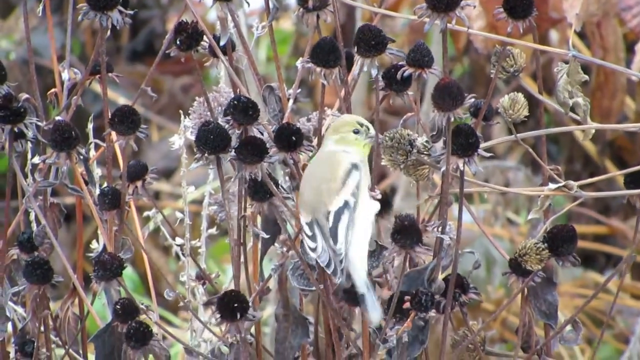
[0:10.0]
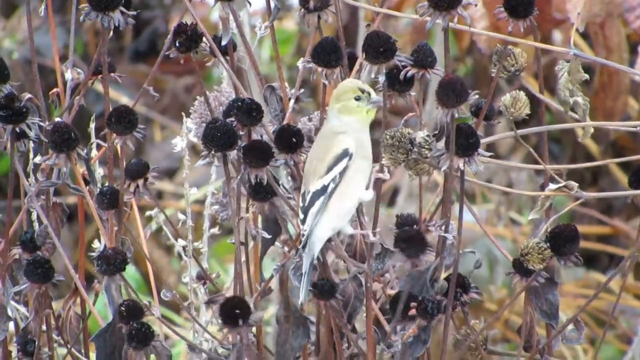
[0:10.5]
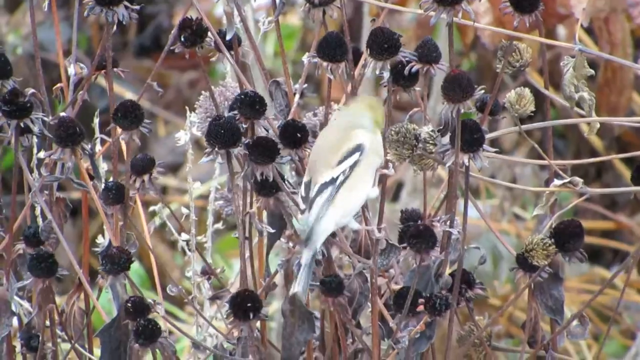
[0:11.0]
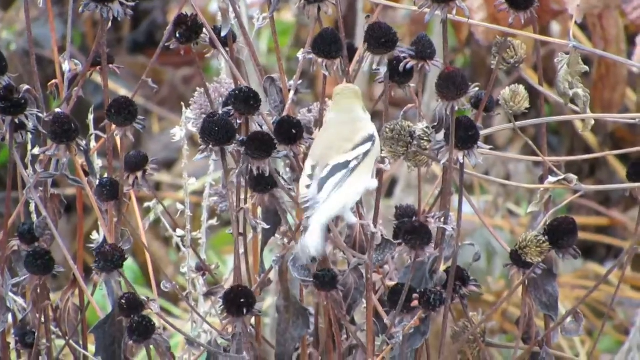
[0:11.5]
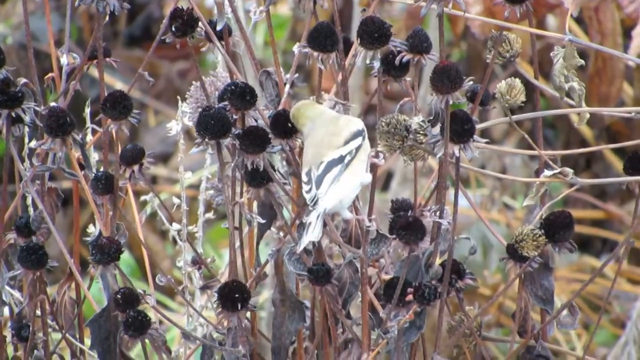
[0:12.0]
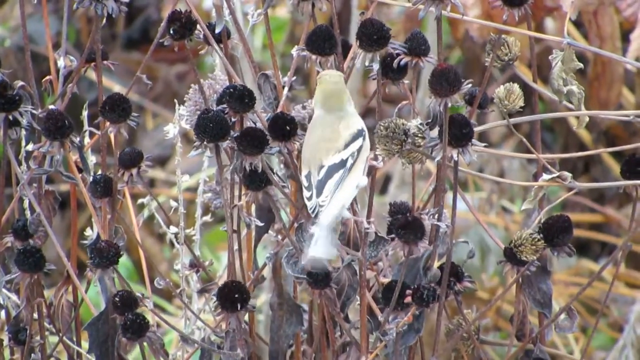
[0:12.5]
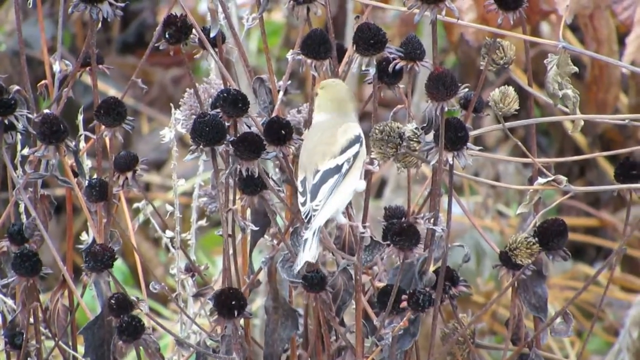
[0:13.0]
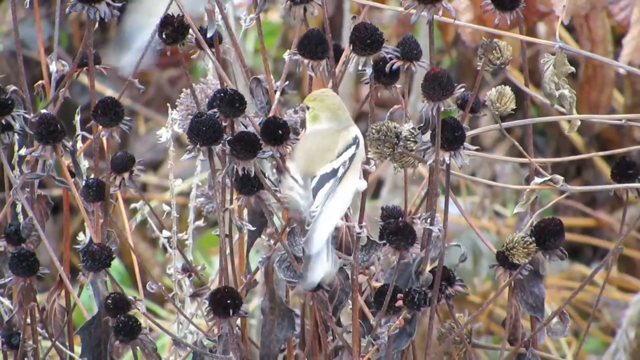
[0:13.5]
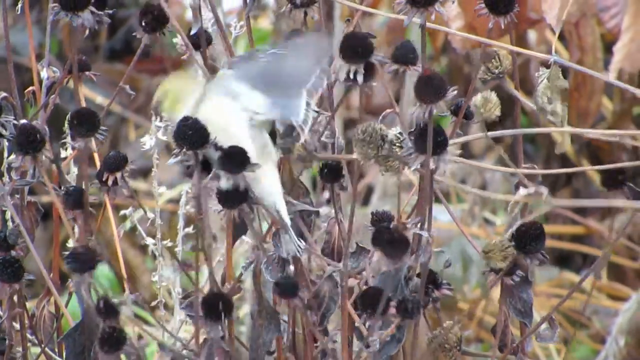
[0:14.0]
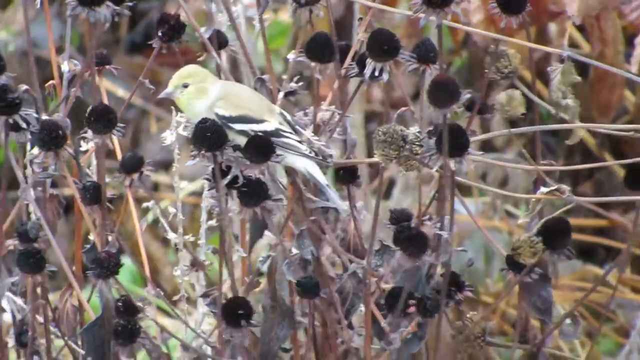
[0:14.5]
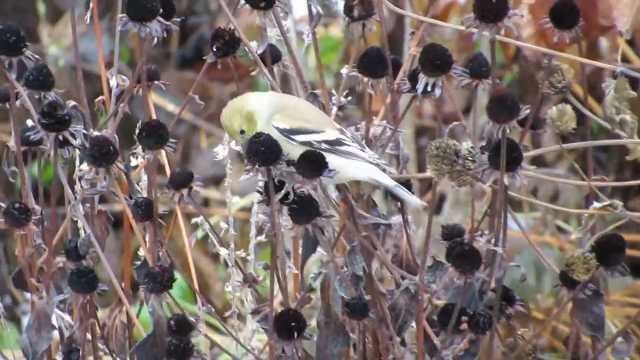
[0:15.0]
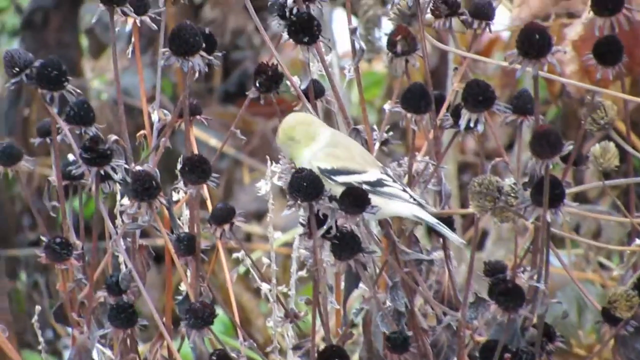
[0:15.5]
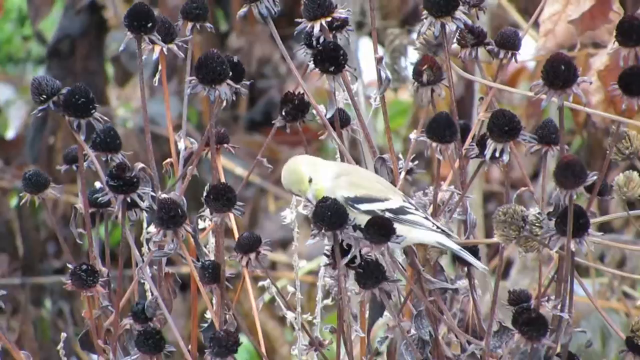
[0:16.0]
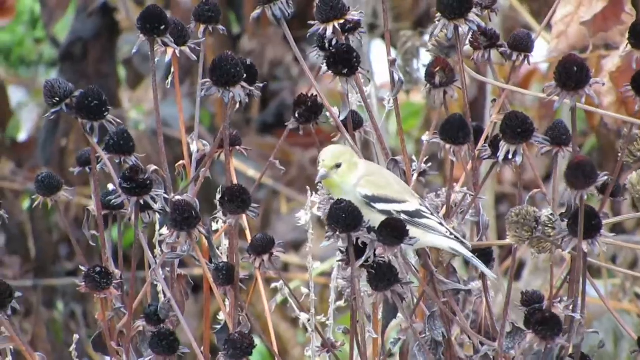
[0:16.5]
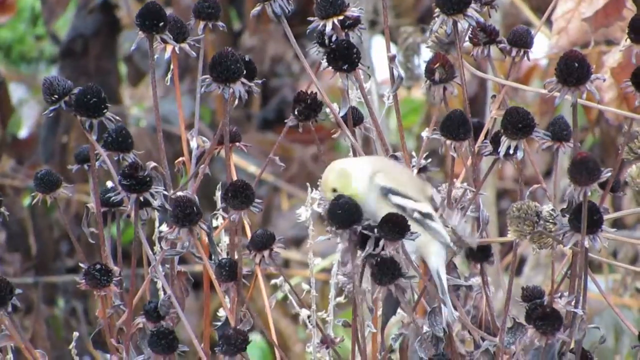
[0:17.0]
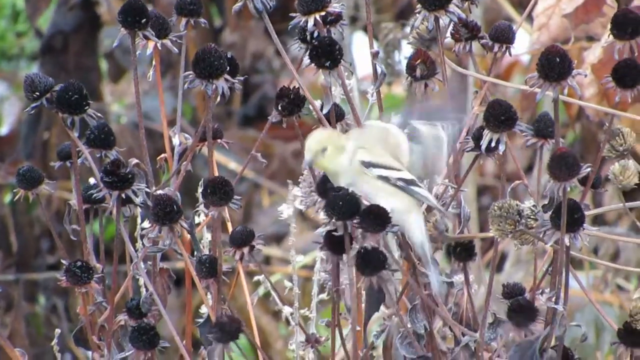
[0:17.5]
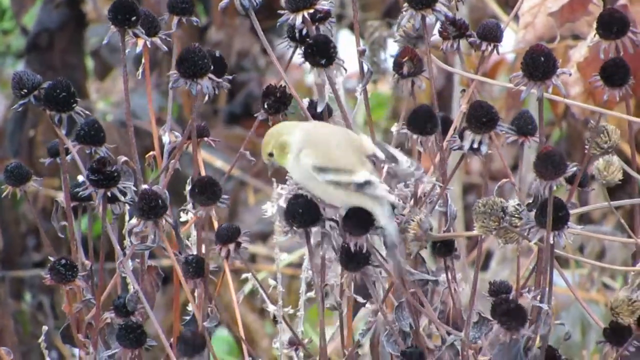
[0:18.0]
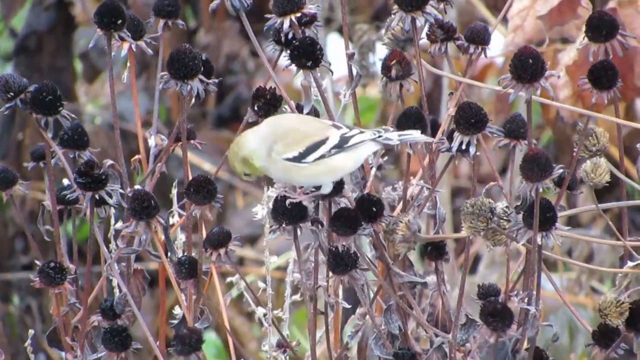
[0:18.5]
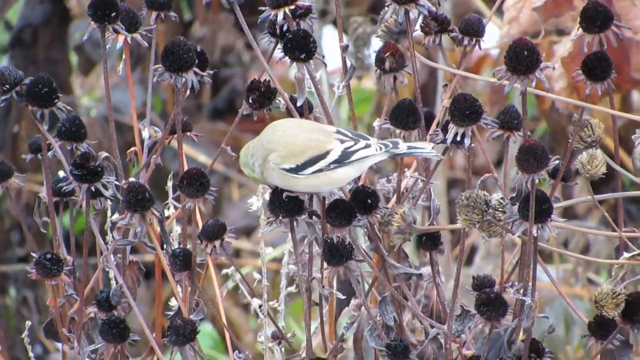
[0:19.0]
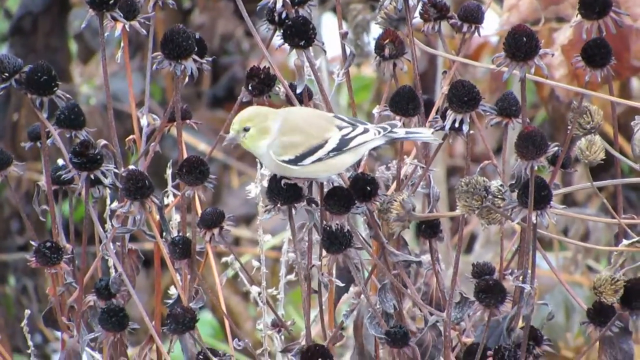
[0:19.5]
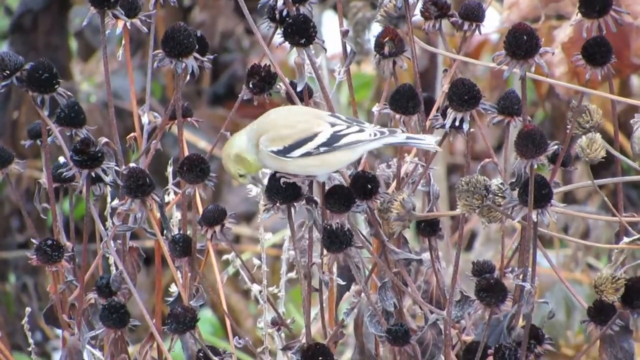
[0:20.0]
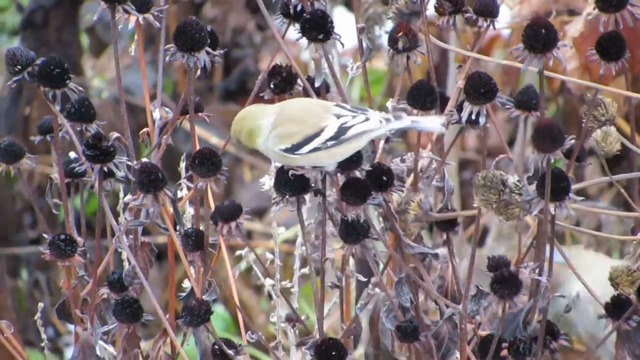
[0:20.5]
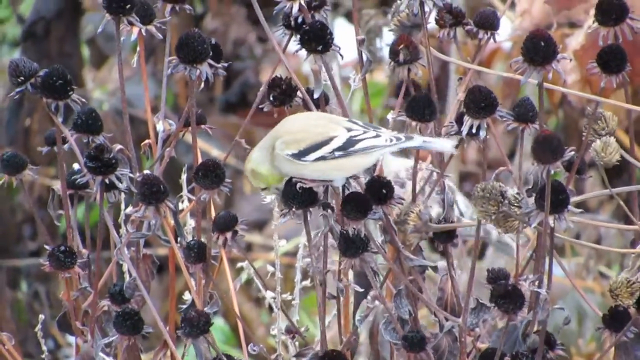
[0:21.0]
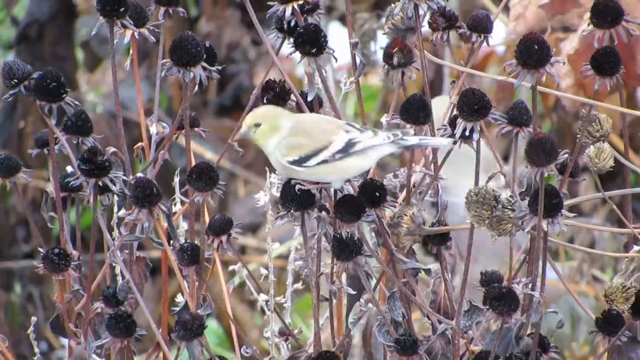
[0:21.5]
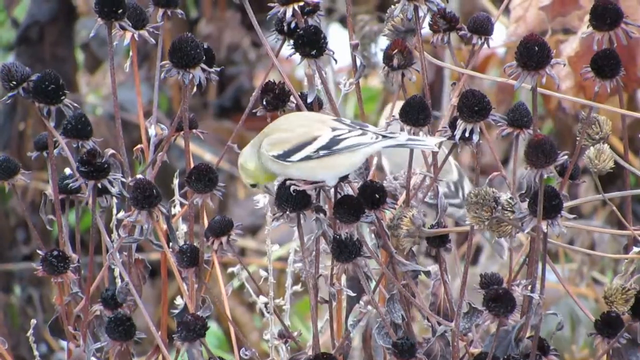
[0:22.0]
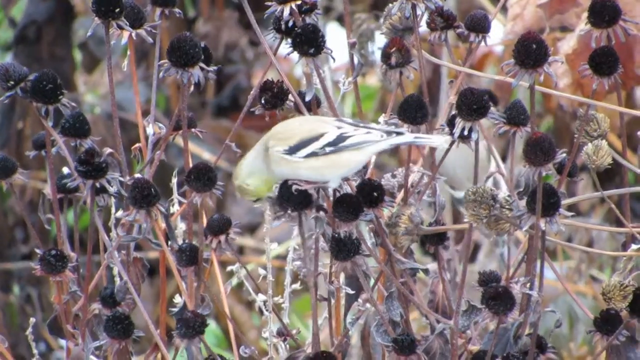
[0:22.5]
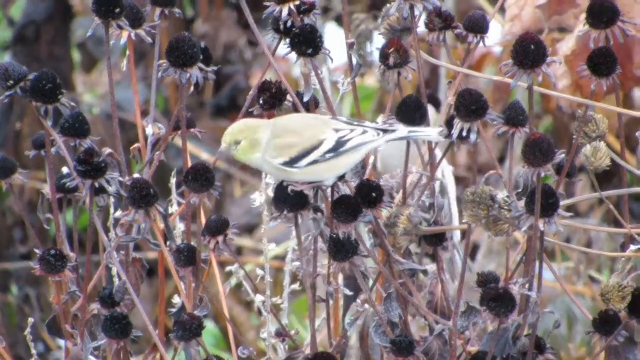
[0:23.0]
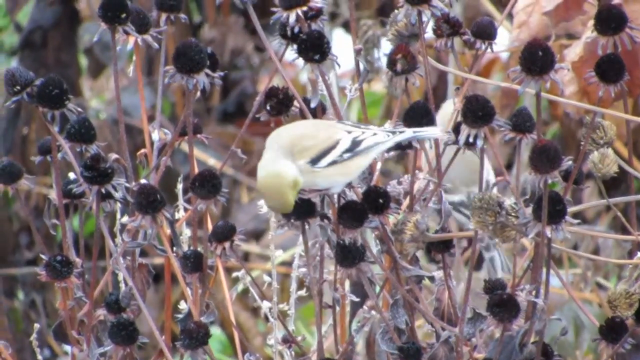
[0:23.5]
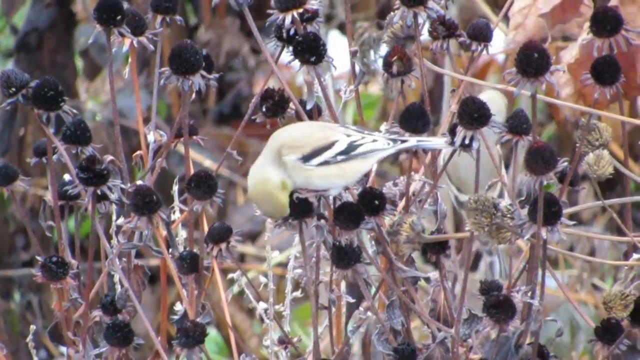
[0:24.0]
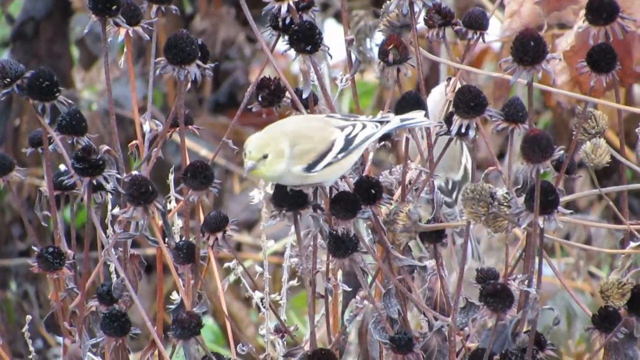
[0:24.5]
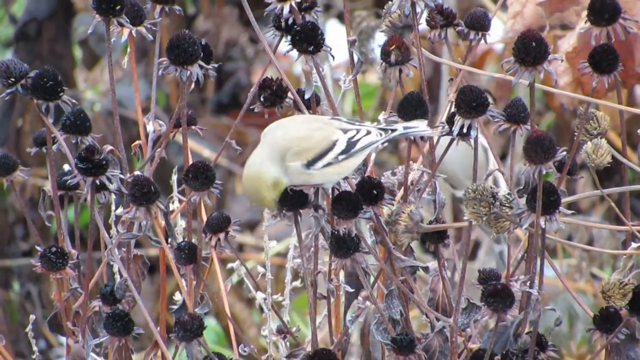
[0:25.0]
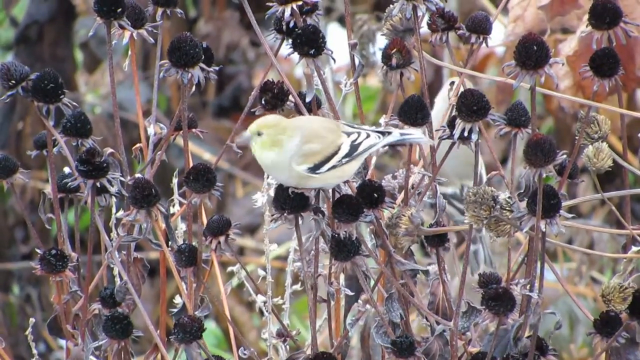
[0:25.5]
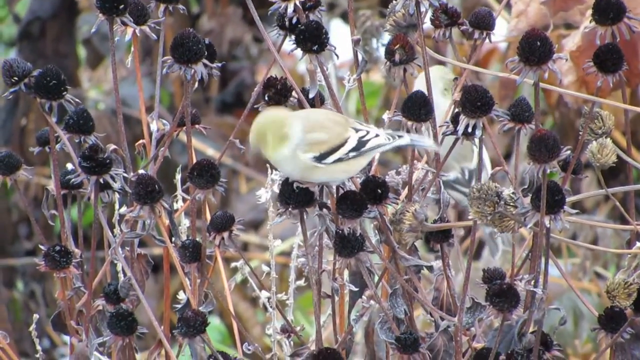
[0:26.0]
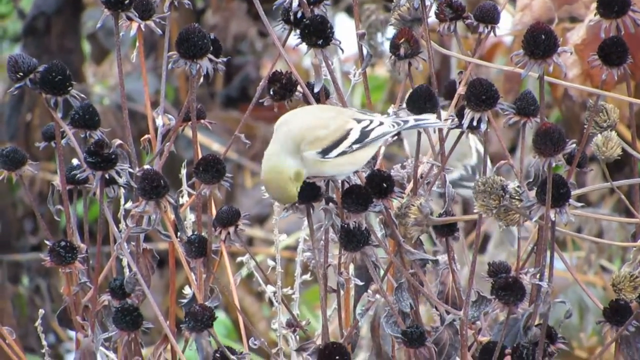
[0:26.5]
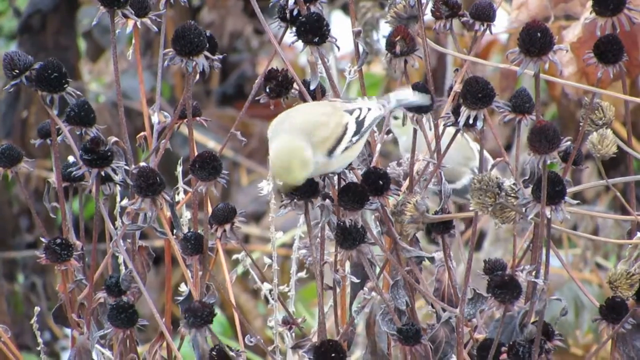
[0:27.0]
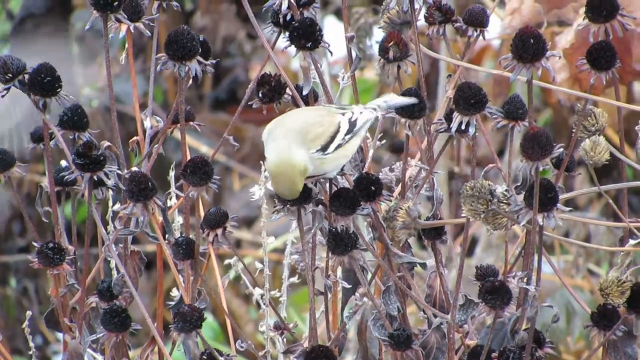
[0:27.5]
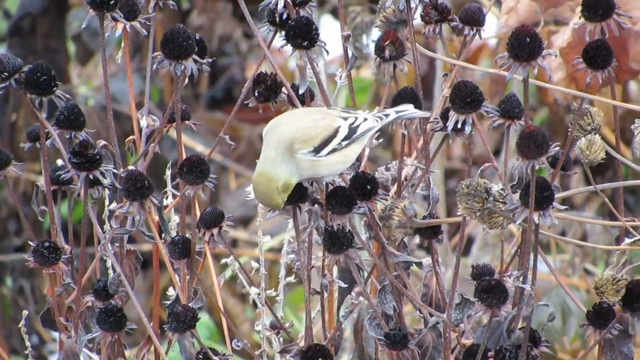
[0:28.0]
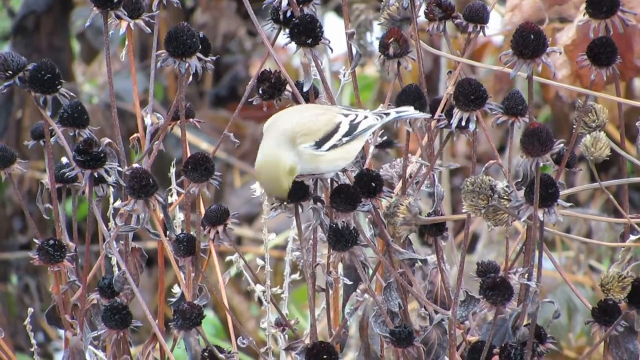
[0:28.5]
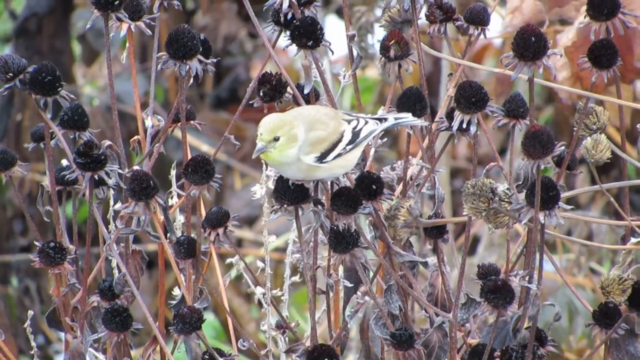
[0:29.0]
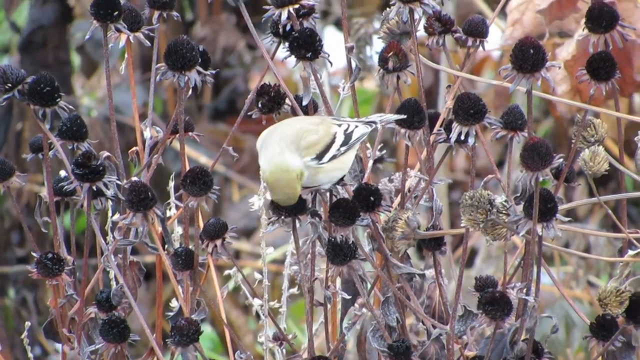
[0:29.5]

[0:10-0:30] Behind the dried flowers is what looks to be a green bush or tree, and it seems to be daylight but not too sunny. Another bird, apparently of the same type, flies through the frame, and the bird being recorded adjusts itself onto a different part of the flower plant. It pushes its beak into the center of the black part of a flower and picks off parts of it. It seems to briefly lose its balance and uses its wings to flutter back into place. The bird that flew through the frame earlier comes back; it is in the back part of the plant and looks to be searching for seeds as well. It looks to be the same species, with a greenish tan body and black and white feathers. The bird in the back flies away, and the bird in the front keeps eating the seeds on the flower.